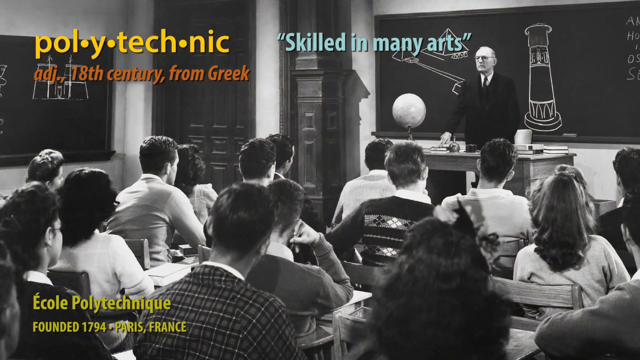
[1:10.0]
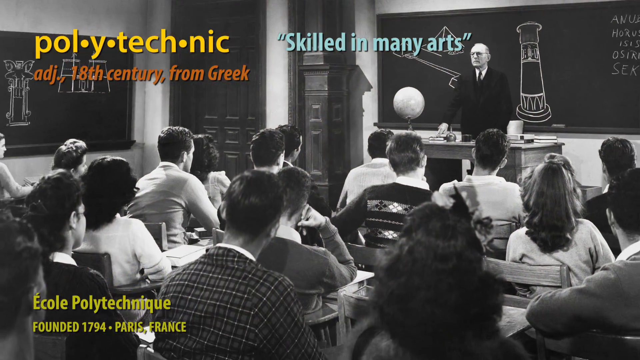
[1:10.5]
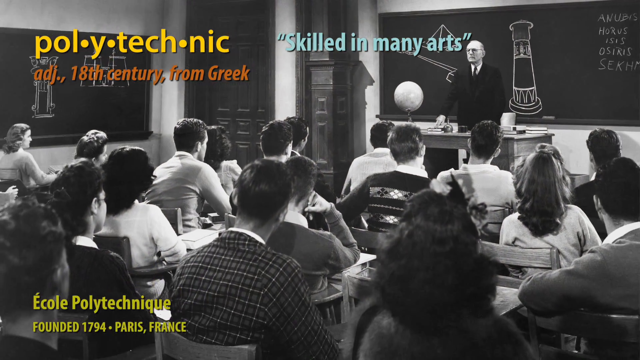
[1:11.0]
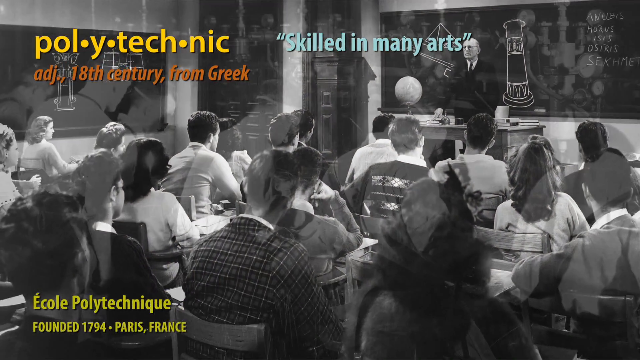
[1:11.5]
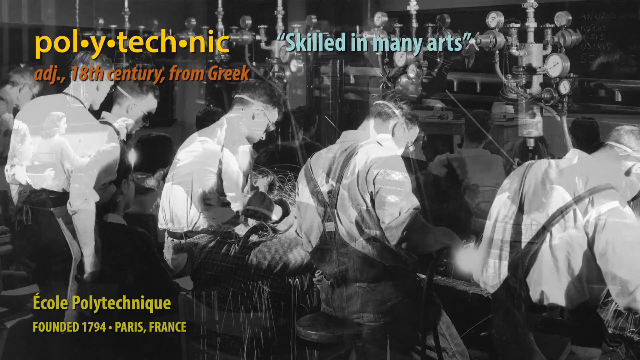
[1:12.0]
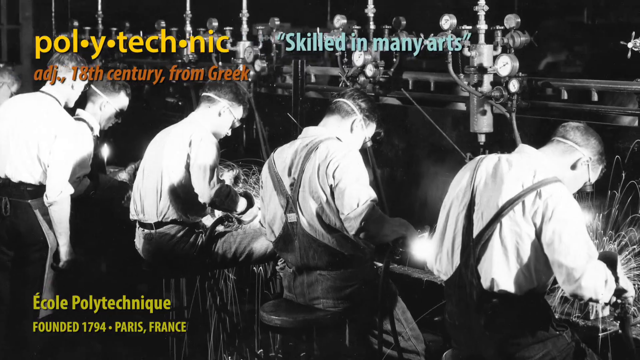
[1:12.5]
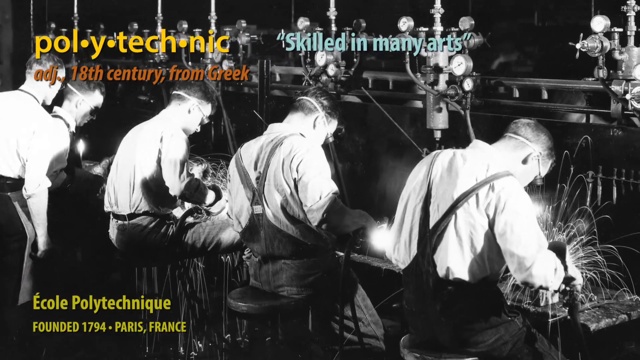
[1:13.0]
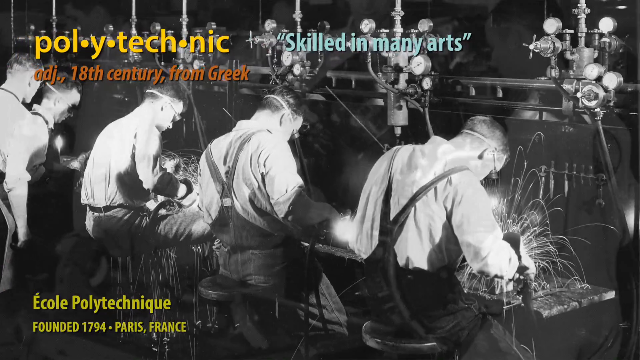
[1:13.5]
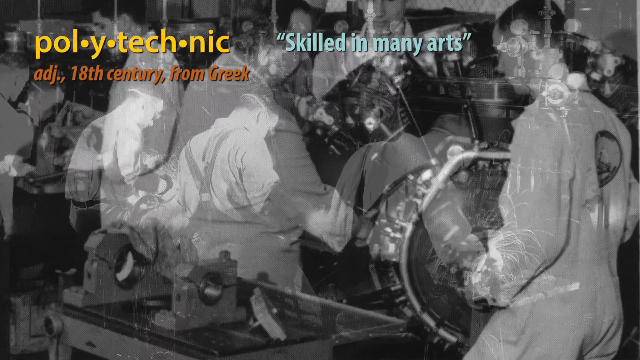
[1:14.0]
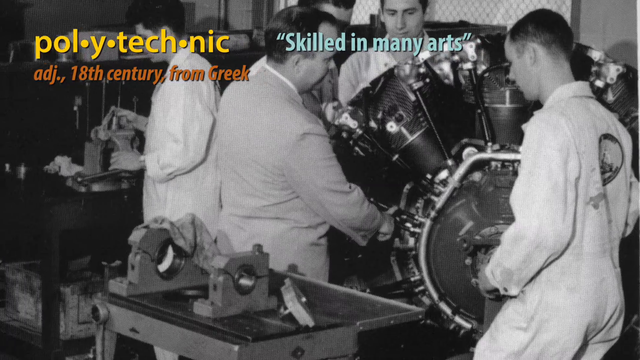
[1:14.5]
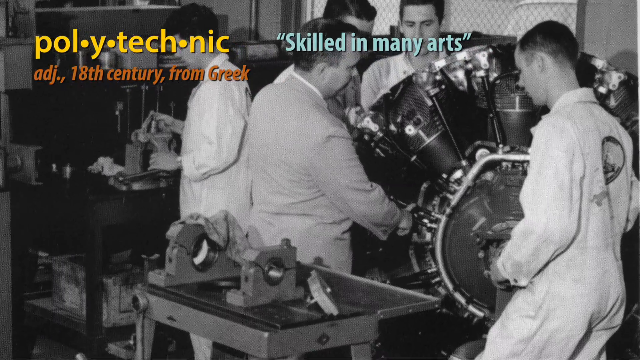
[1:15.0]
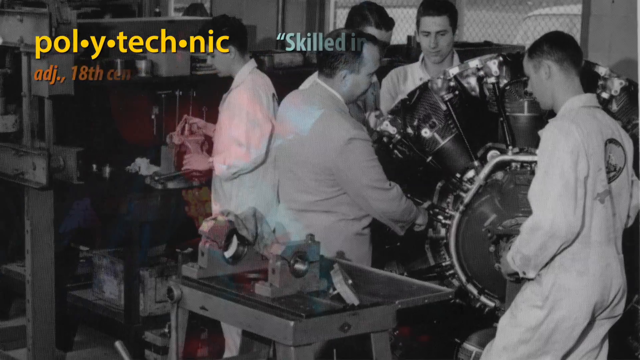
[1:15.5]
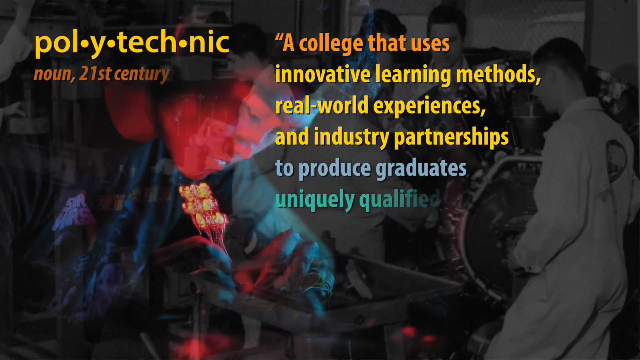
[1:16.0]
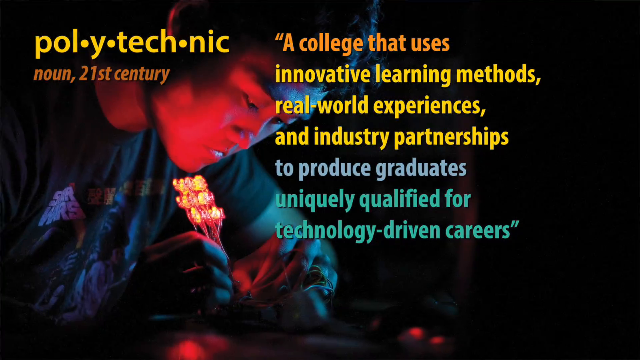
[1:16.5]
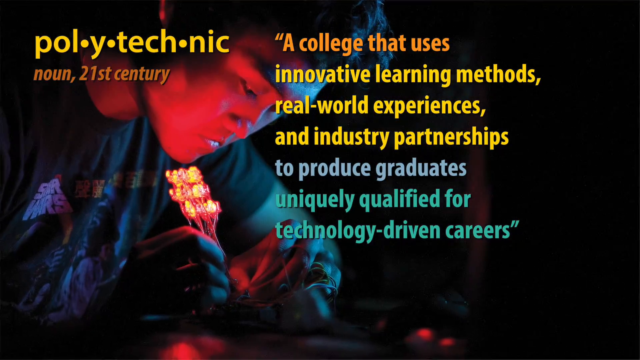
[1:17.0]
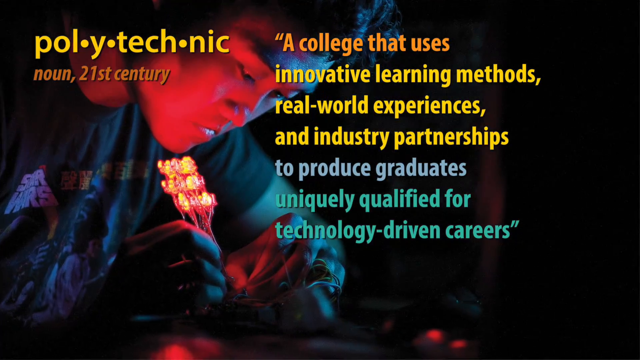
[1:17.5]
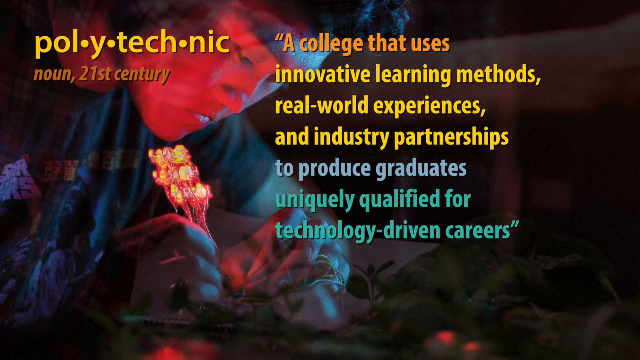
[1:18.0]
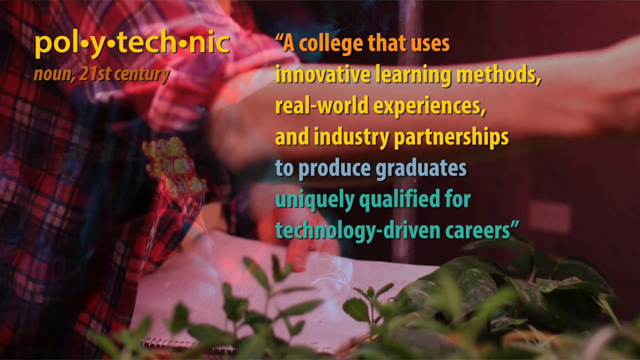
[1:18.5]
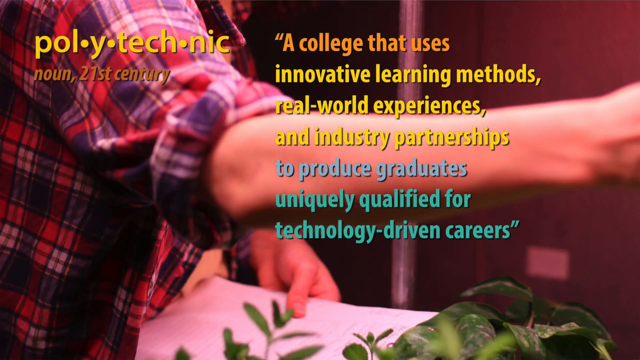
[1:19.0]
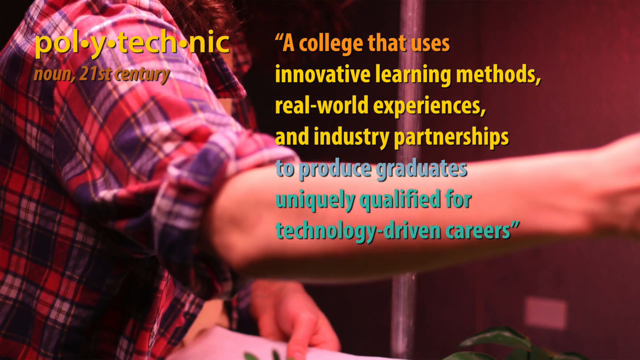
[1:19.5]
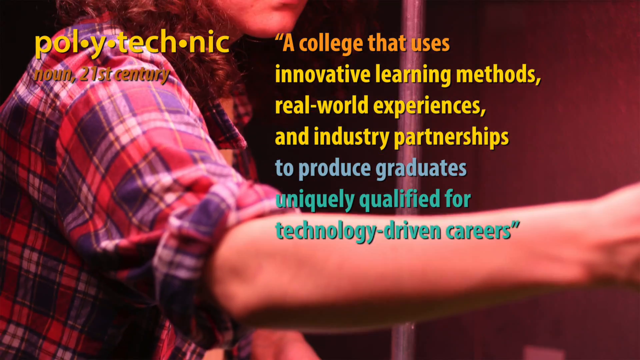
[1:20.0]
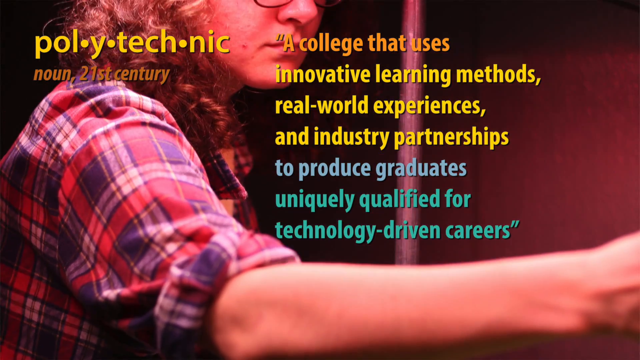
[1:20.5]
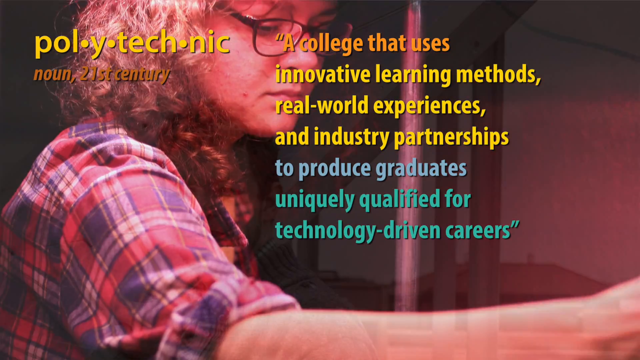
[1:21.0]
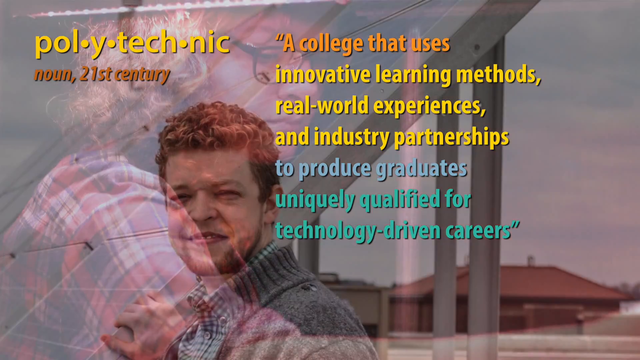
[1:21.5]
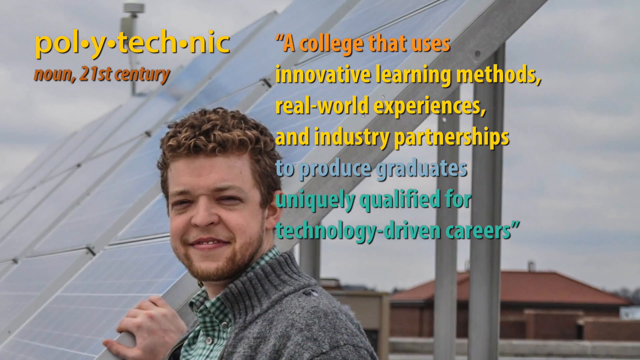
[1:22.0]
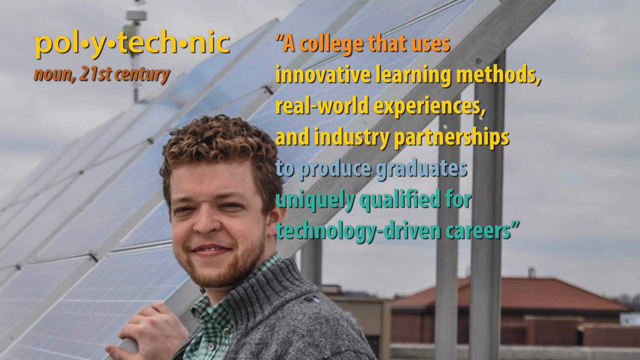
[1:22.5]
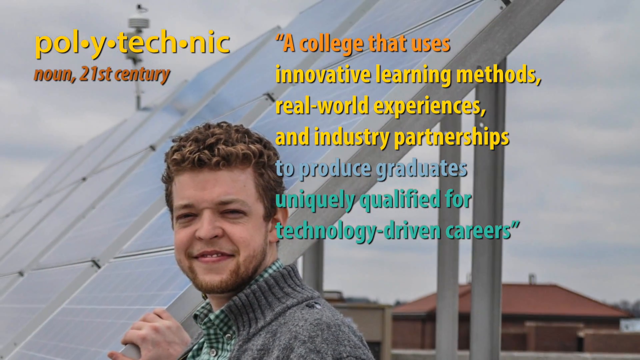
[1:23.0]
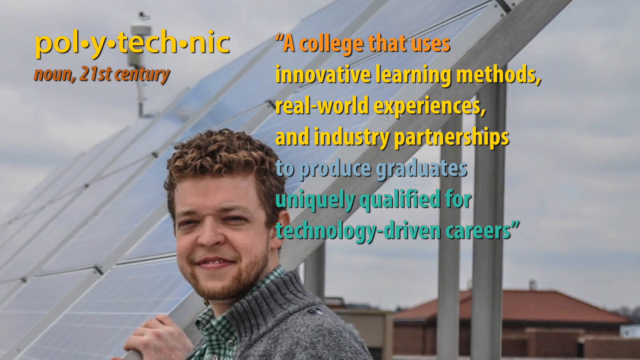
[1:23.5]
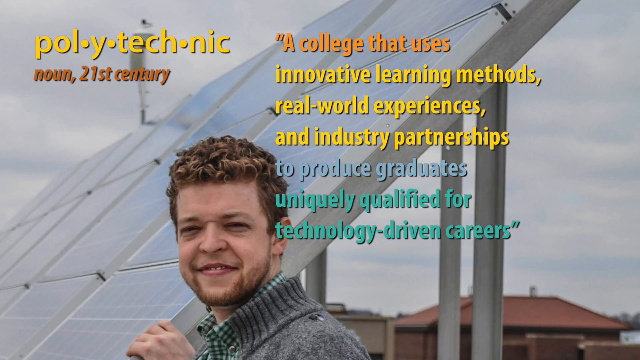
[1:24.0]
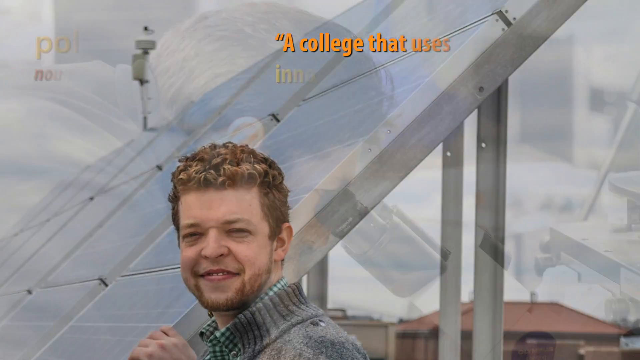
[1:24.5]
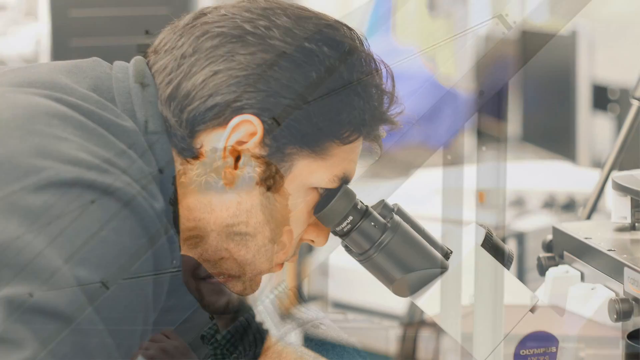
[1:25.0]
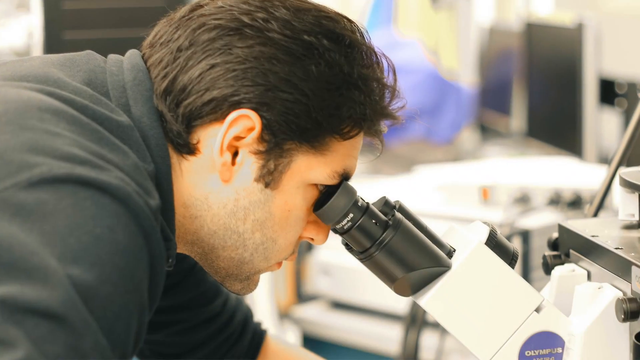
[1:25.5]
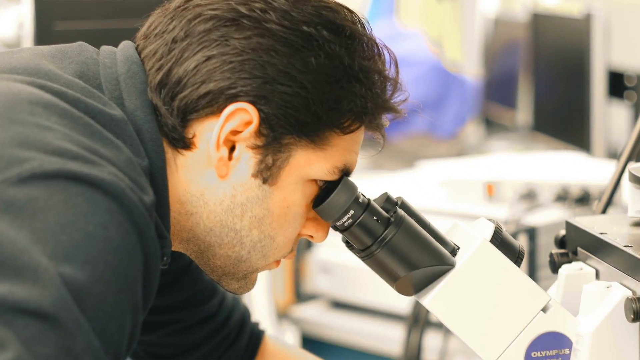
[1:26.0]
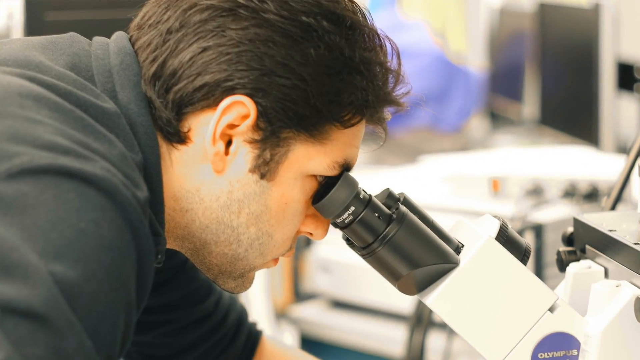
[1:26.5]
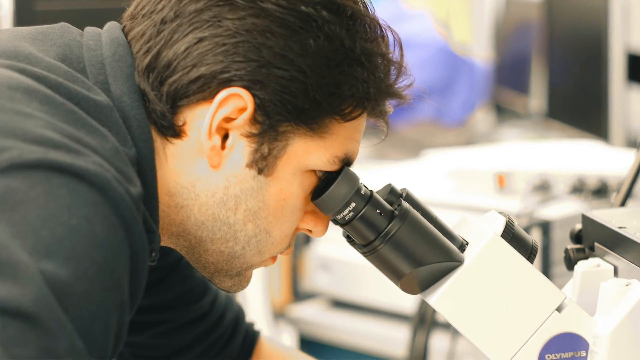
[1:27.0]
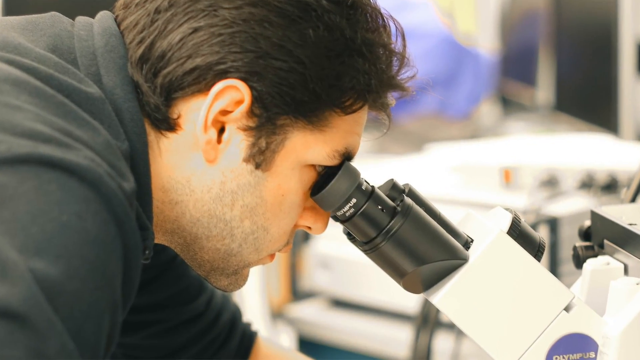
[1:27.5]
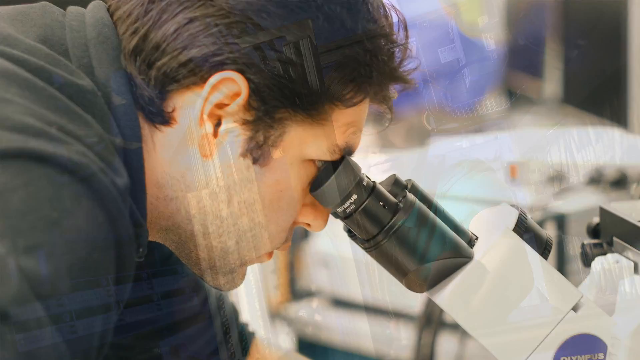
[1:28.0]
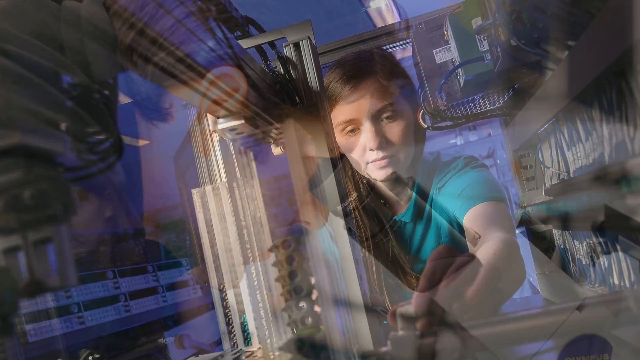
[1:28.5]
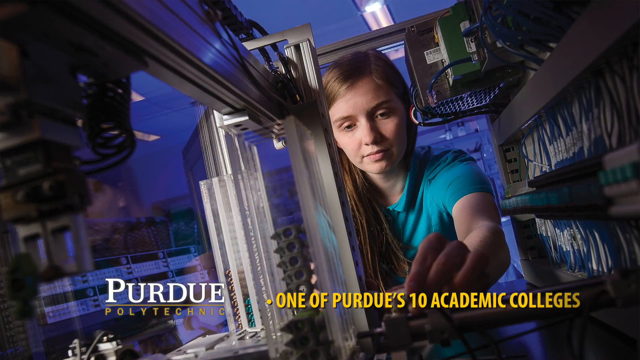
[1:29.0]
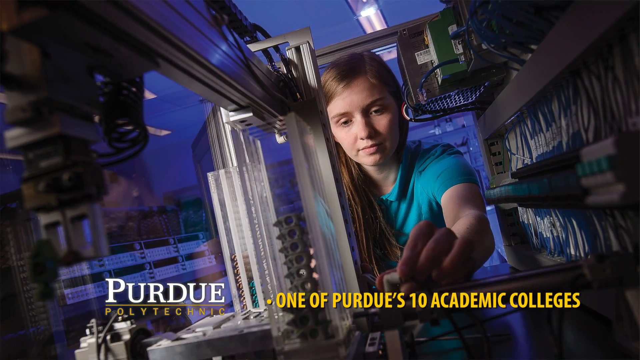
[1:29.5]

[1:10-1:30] The explanation of the word polytechnic continues: from the 18th century, from Greek, and from École Polytechnique, founded in 1794 in Paris, France. Old photos from the Polytechnique follow. Then the 21st-century polytechnic is presented as a college that uses innovative learning methods, real-world experience and industry partnerships to produce graduates uniquely qualified for technology-driven careers. Present-day photos of students and polytechnic workers appear, with information that Purdue Polytechnic is one of Purdue's ten academic colleges. Further photos show welders at a line of industry workers, a woman working with metal, a man standing at solar panels who looks happy, men using a microscope, and a woman doing a job on some machine, possibly a PLC machine.